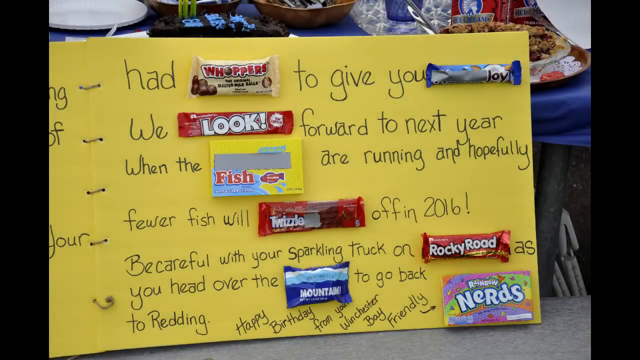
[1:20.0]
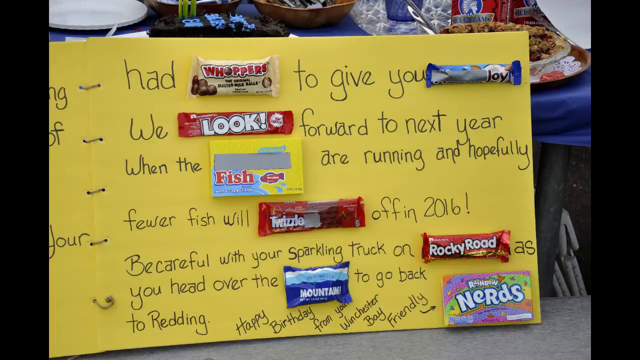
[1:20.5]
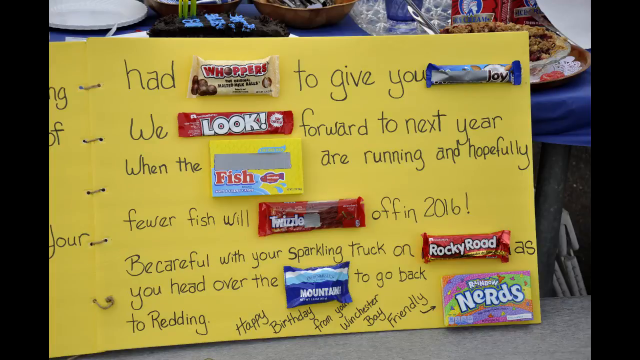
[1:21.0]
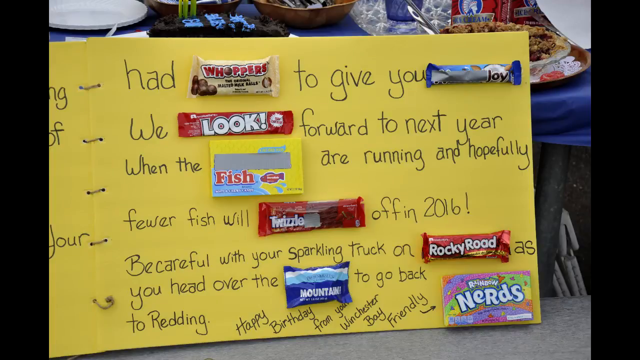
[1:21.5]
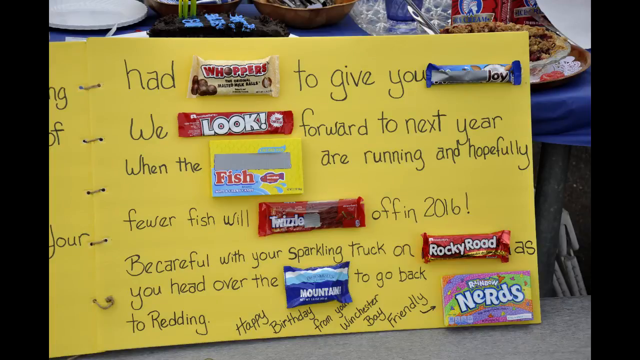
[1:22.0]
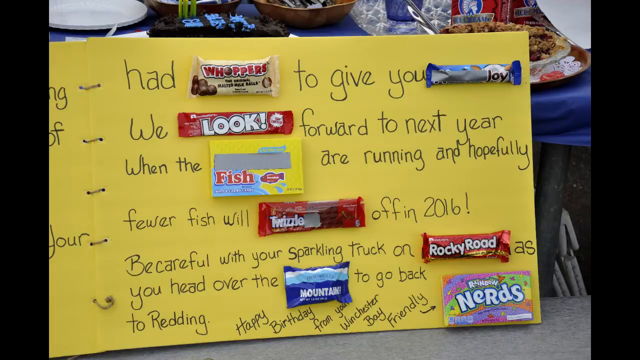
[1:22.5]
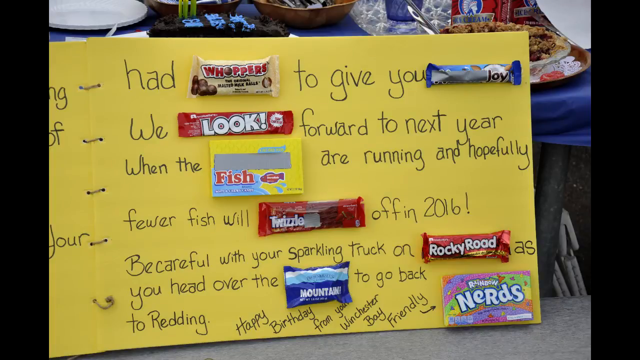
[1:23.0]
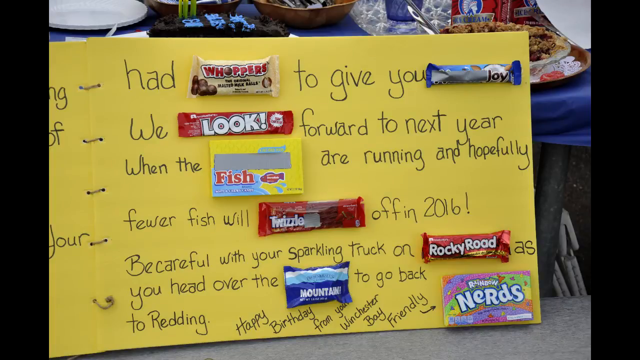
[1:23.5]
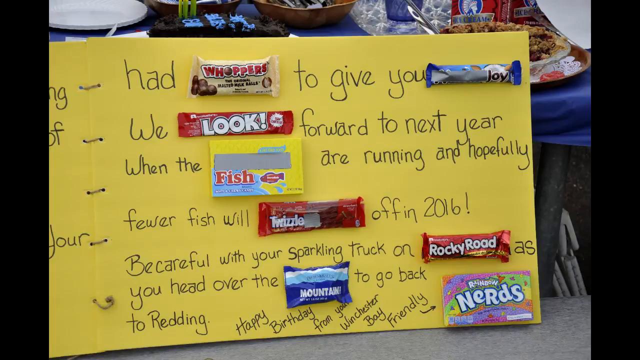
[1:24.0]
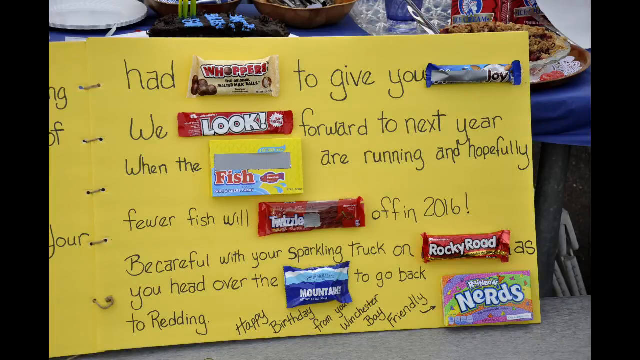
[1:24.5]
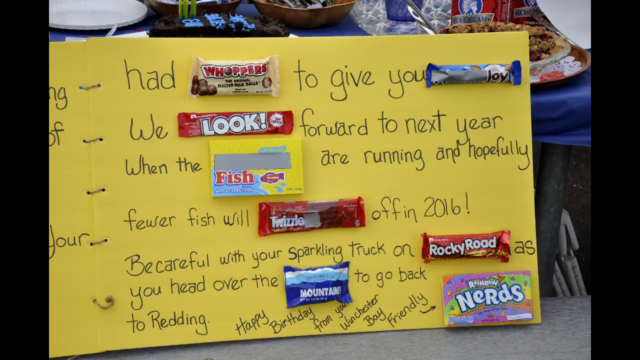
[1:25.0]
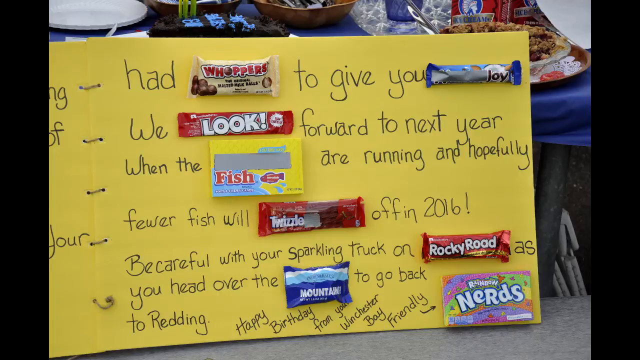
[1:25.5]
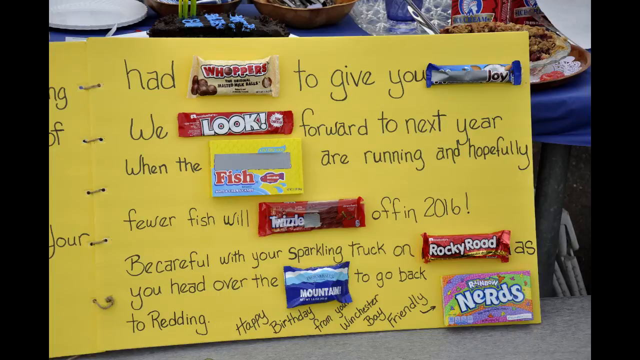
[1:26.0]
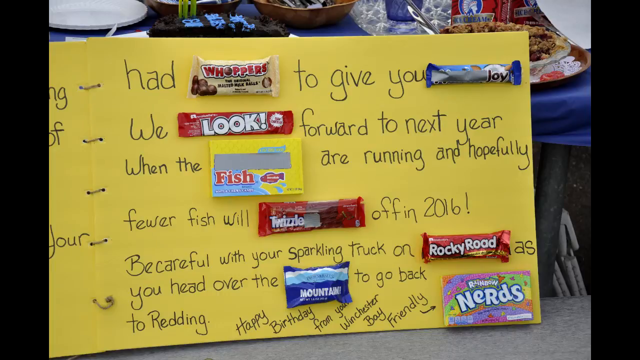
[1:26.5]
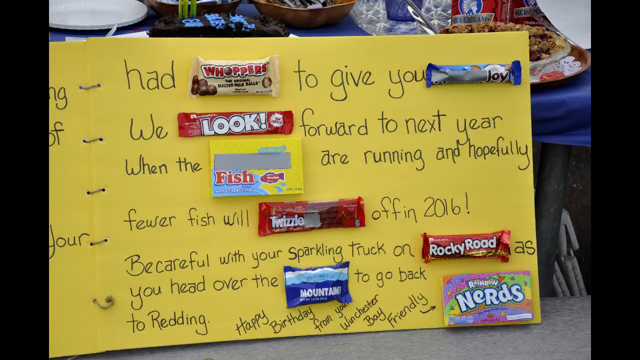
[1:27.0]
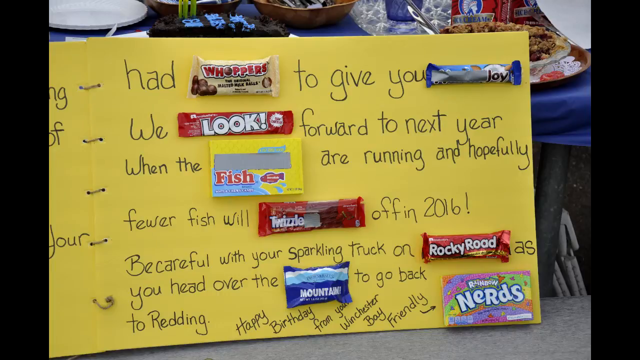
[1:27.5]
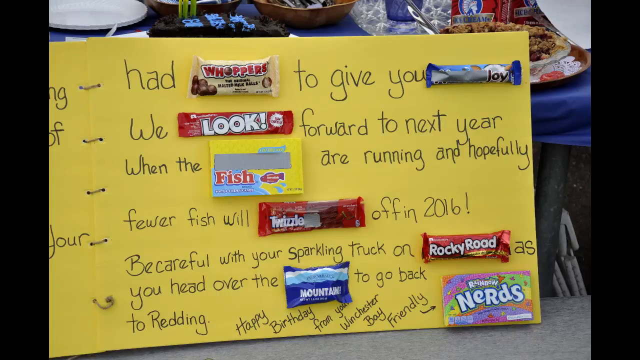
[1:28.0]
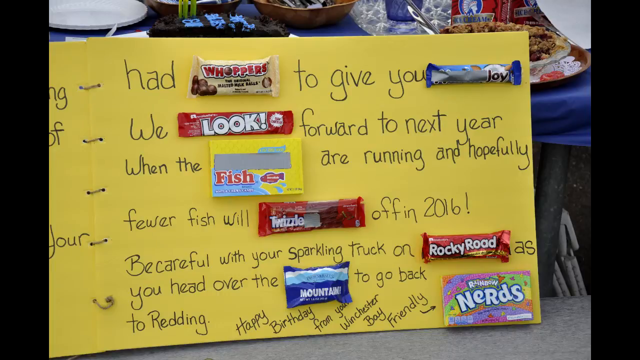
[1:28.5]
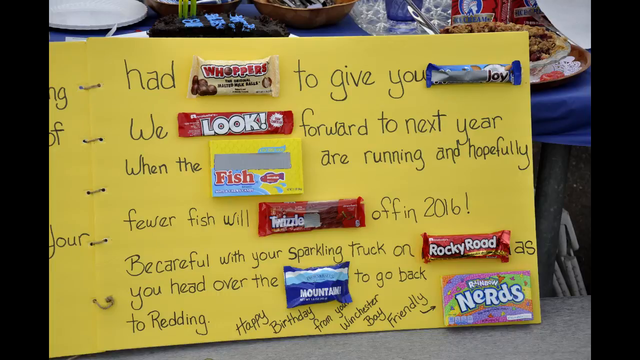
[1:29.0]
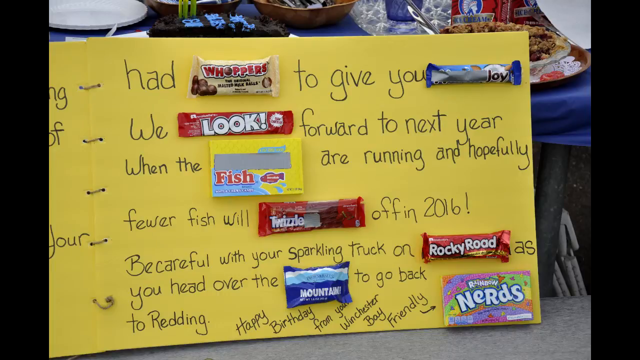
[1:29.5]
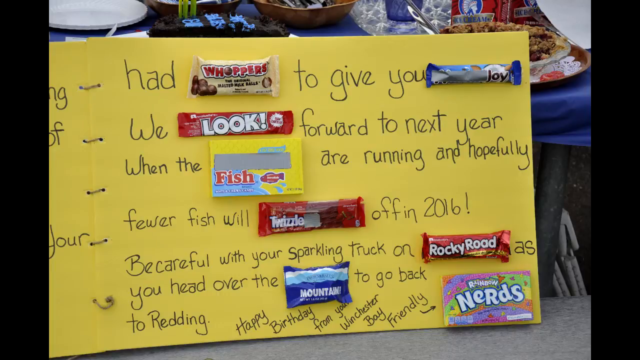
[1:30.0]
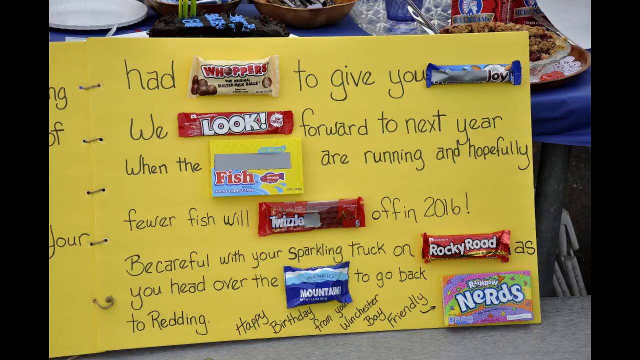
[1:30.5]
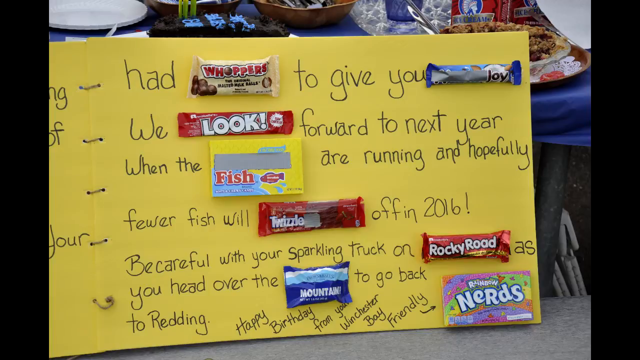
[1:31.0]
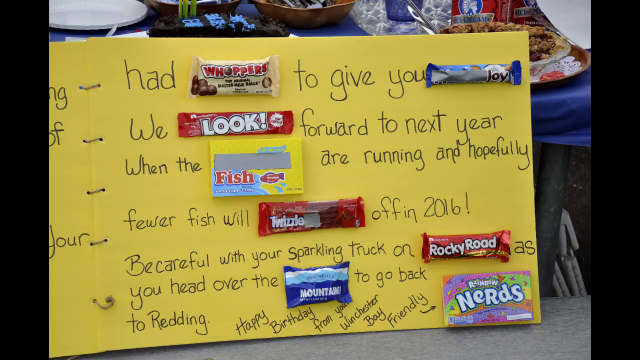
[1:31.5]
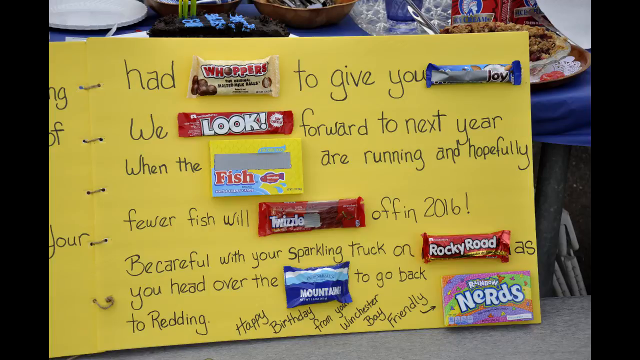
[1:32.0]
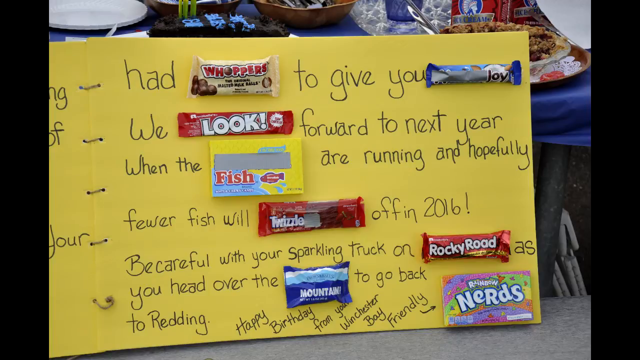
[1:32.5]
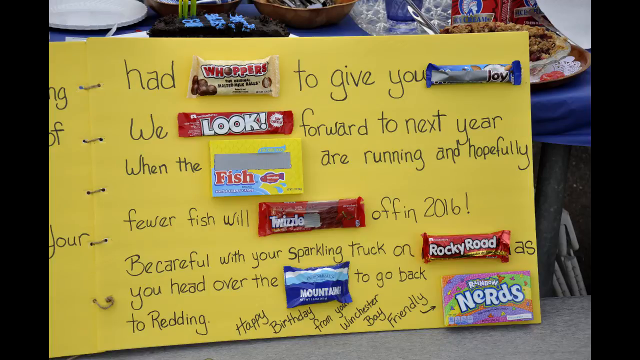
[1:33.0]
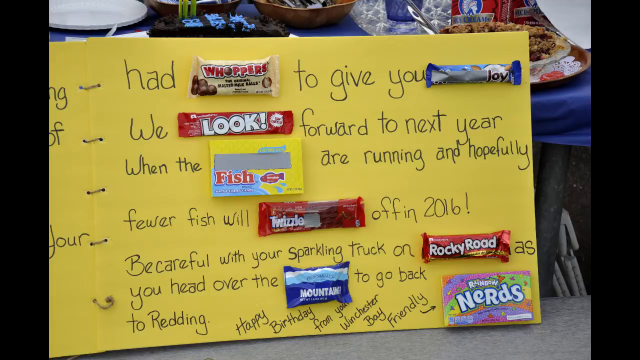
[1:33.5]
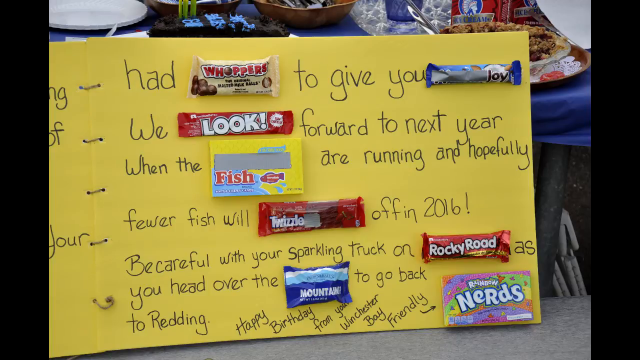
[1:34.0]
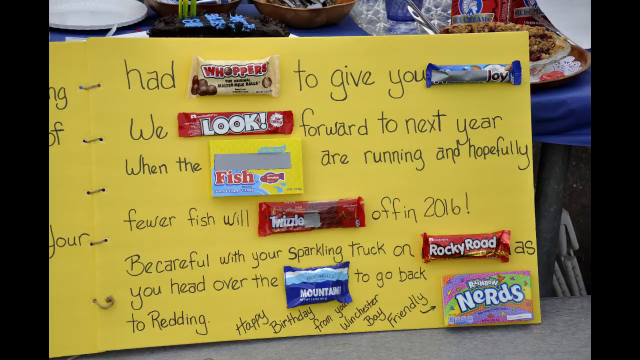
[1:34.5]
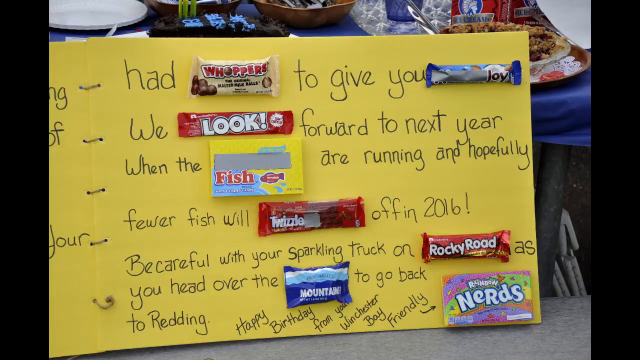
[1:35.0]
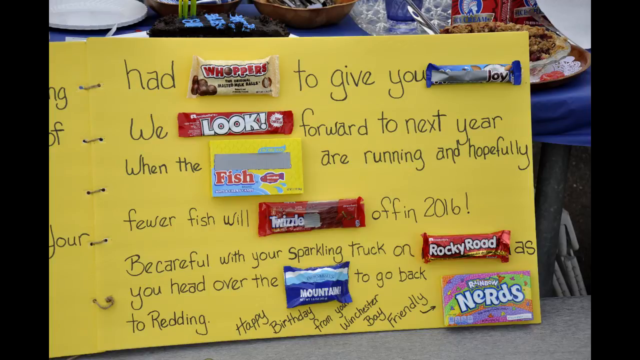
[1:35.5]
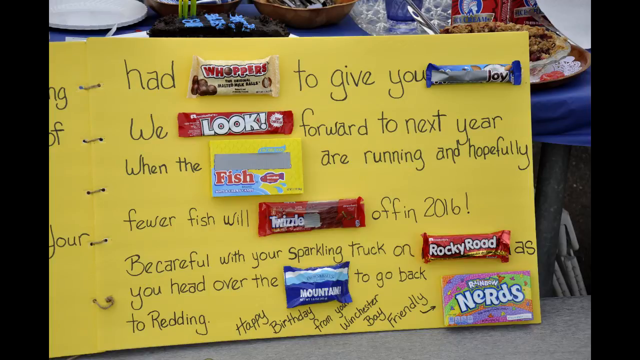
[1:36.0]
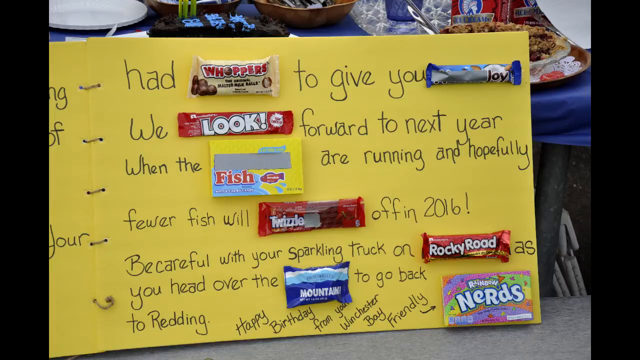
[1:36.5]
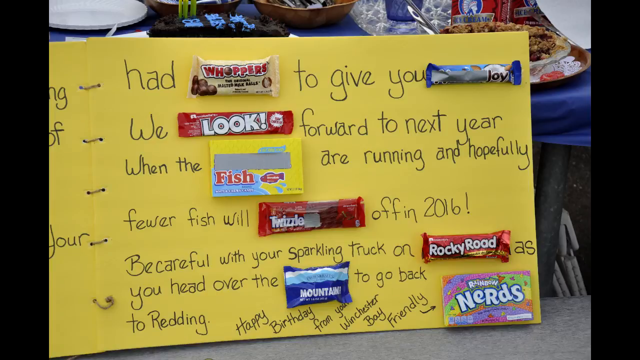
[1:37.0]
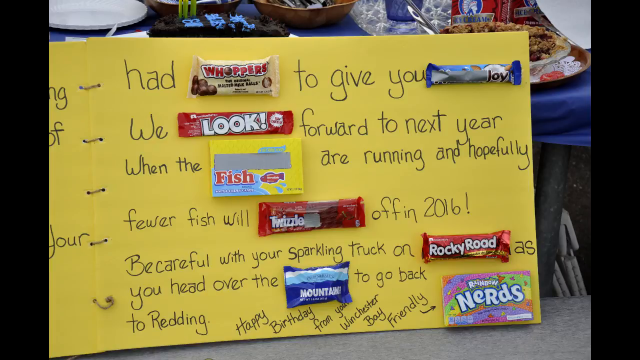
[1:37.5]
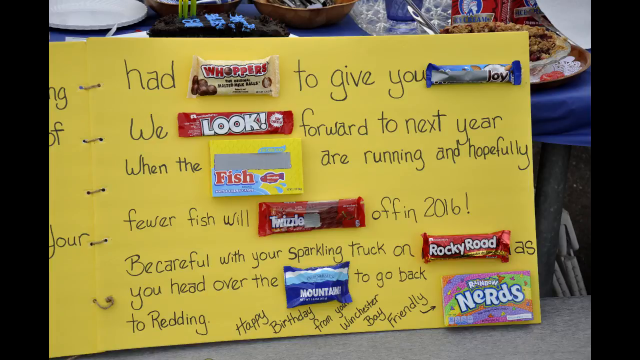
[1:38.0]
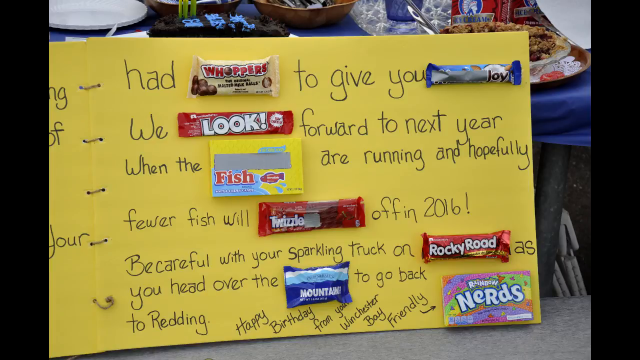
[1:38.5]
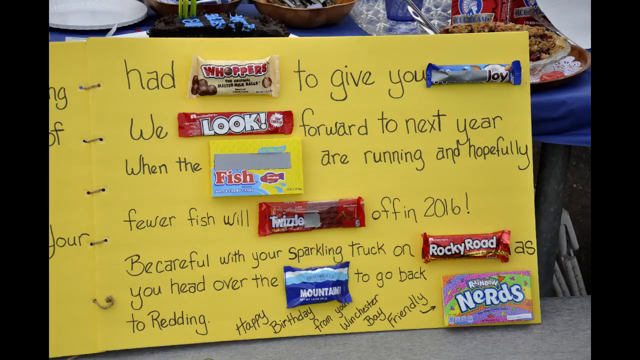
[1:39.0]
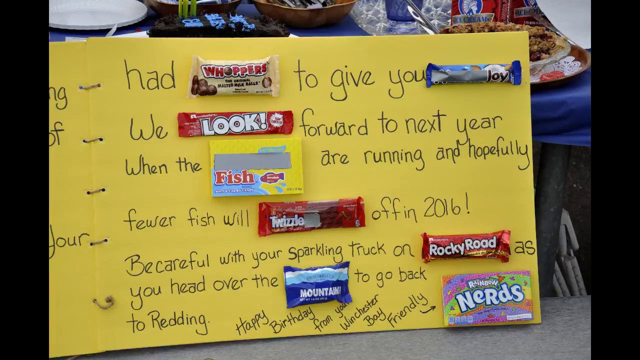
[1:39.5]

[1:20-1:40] A card or diary on white paper, written in black ink, is covered with many candies. In the background there seems to be a birthday setting: a chocolate cake with blue decoration, apparently with a name written in blue on top, a yellow candle, and a plate of food. A yellow paper is decorated with candies; sentences are written with missing words, and the candies carry words that fill the gaps. Different types of candies include fish, Rocky Road and Joy.